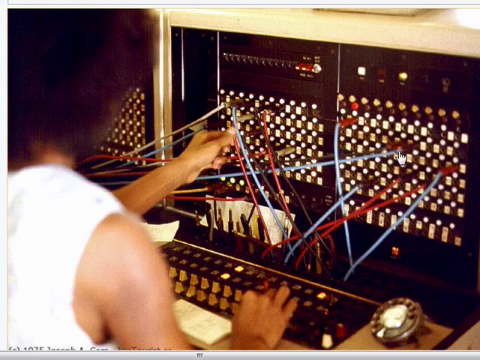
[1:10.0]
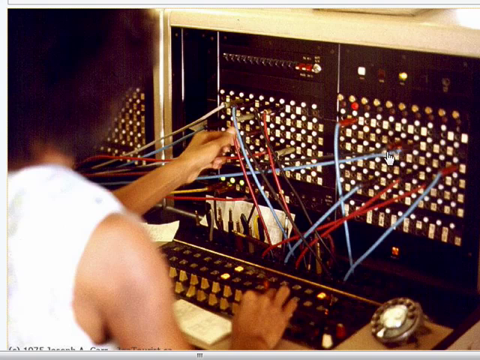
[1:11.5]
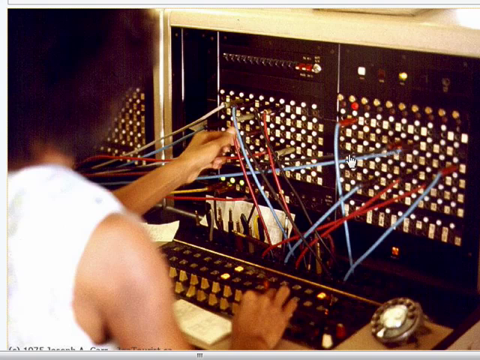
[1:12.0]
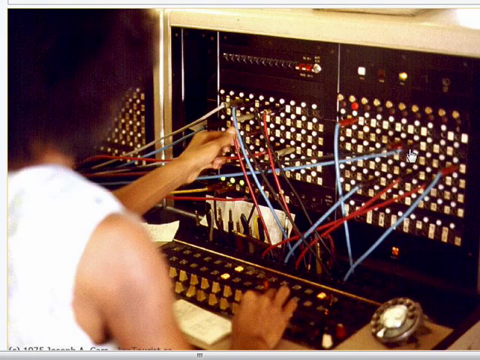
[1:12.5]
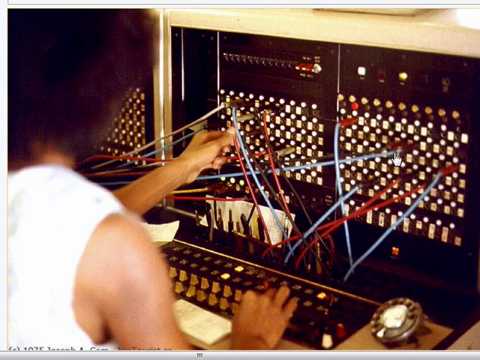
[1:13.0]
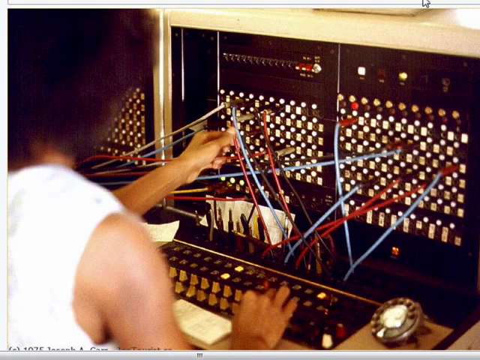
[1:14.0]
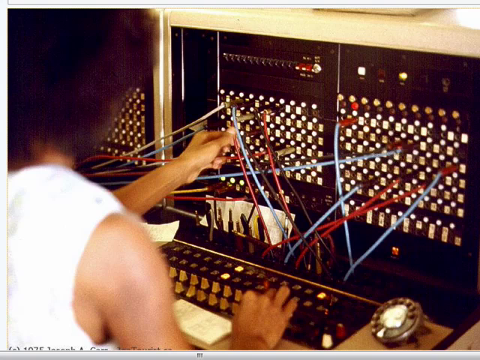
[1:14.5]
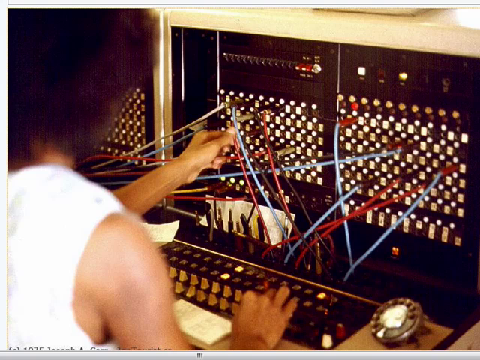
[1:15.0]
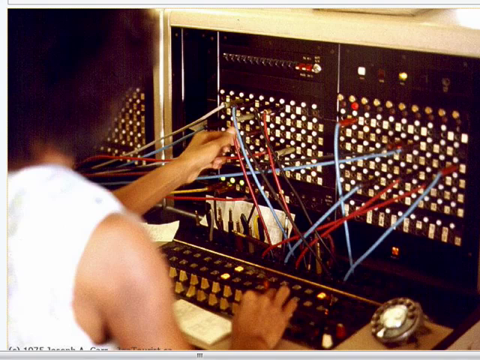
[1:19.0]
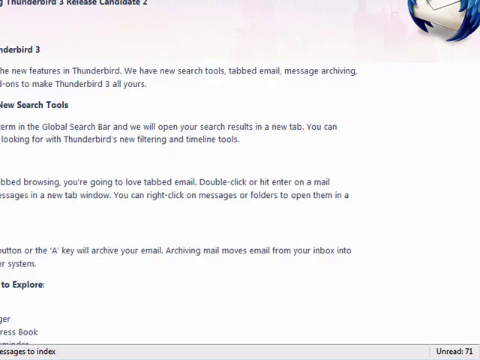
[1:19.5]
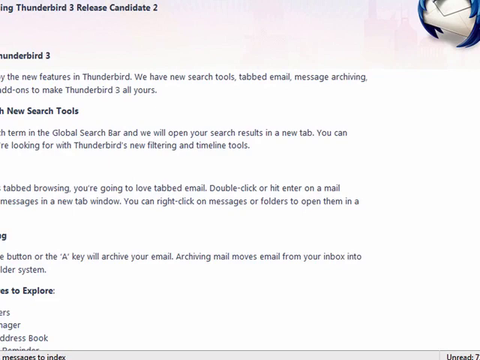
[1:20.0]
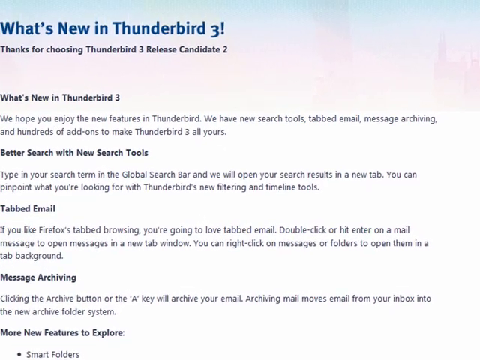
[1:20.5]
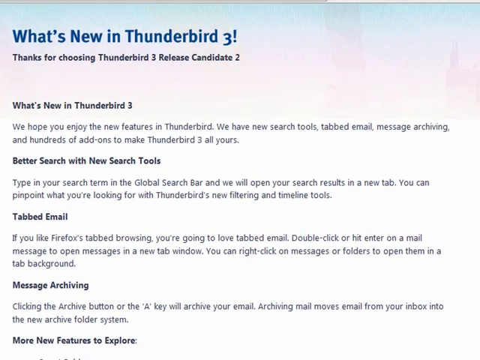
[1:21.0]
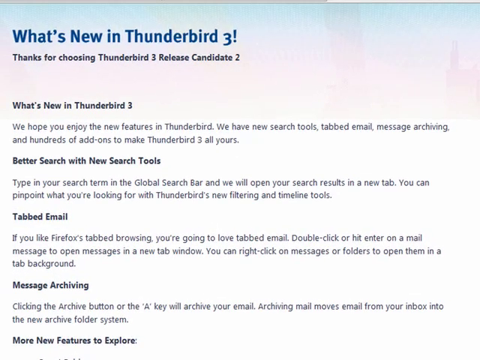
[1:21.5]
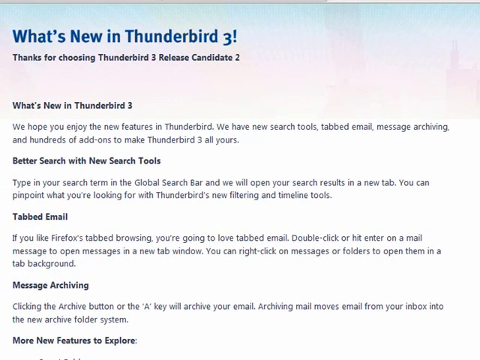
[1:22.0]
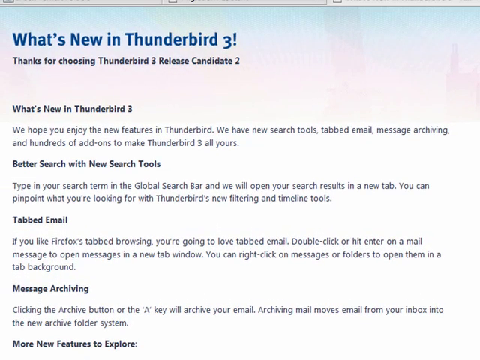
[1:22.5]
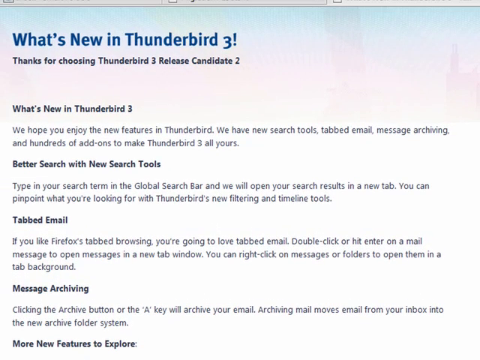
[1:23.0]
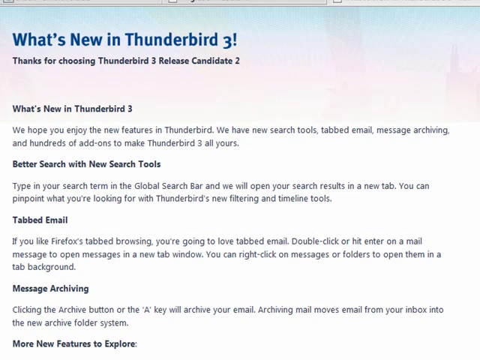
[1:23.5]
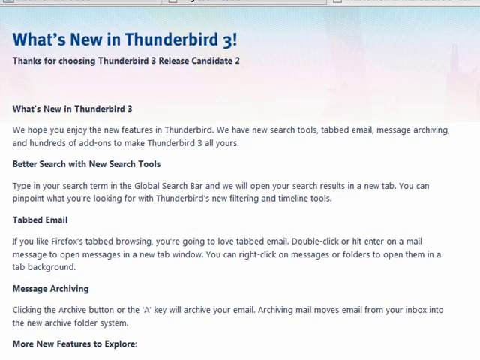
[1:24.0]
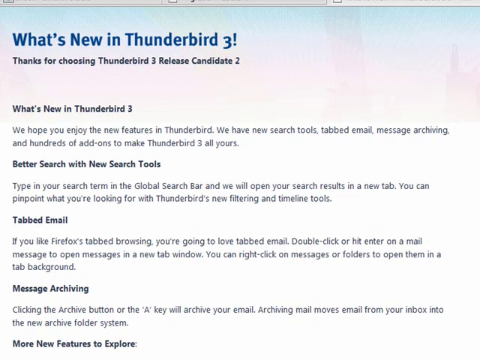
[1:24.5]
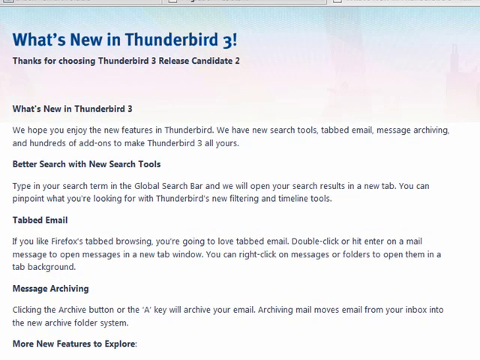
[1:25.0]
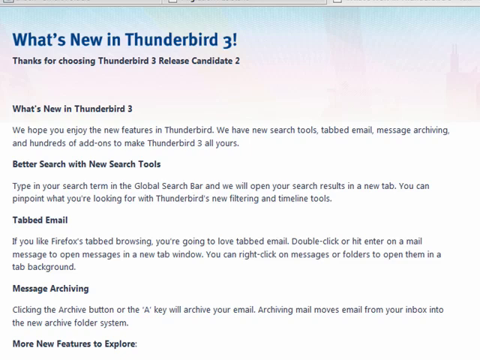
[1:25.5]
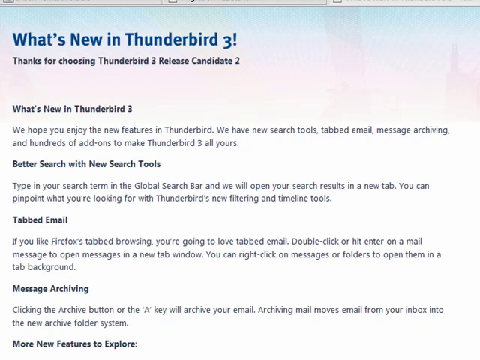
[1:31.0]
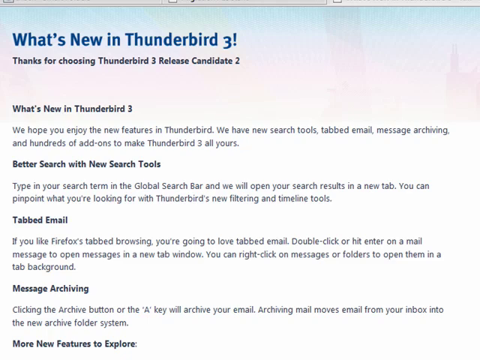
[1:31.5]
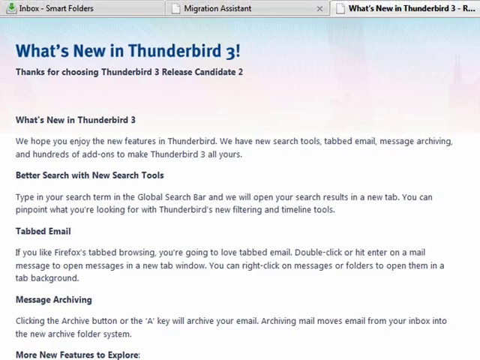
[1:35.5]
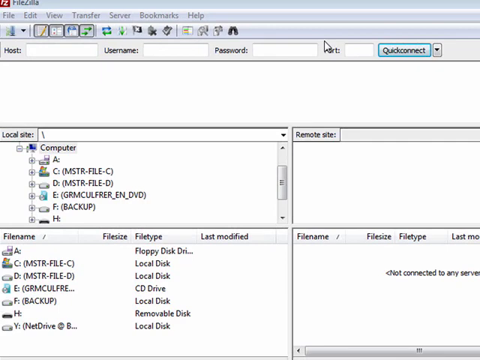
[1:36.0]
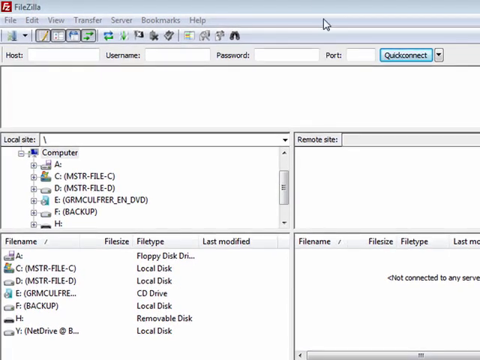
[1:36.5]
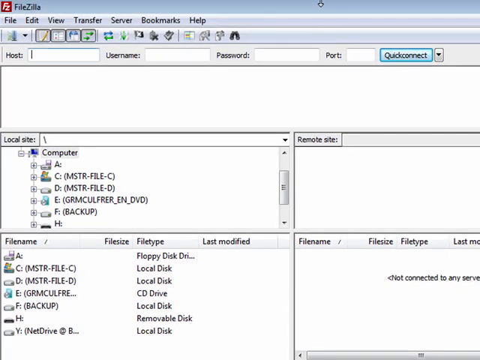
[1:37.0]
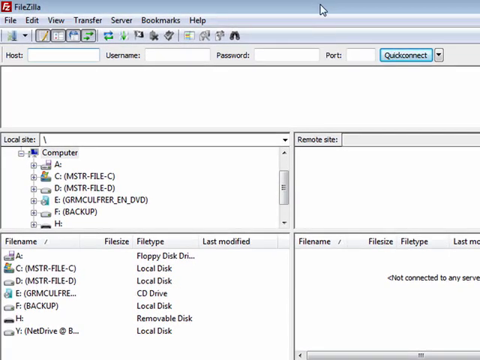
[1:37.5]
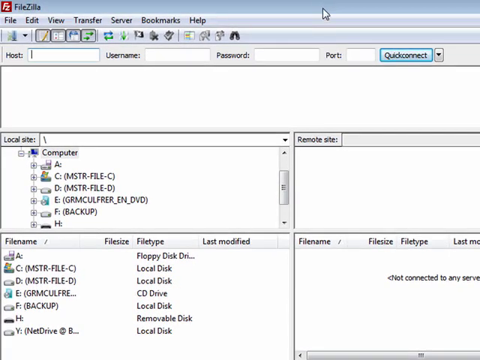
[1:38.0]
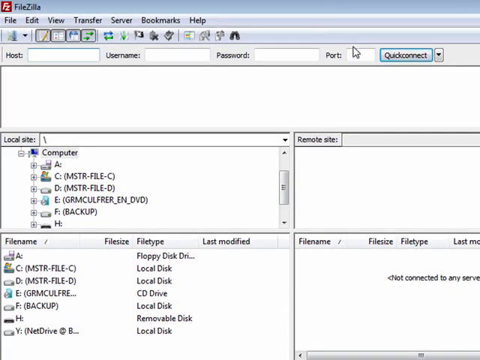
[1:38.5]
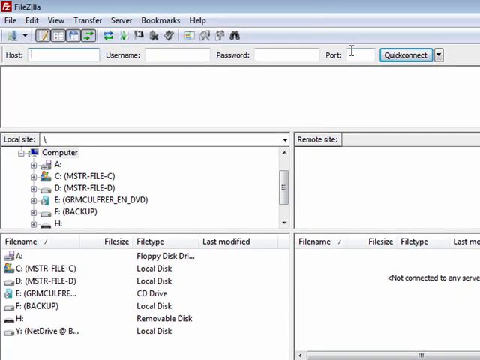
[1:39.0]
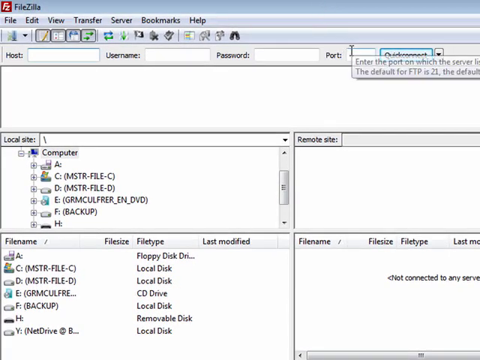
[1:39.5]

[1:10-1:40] A close-up view shows the image of an old-fashioned analog telephone switchboard. It is dark brown, with rows and columns of hundreds and hundreds of holes into which telephone cables can be plugged to make connections. On the left side of the screen is a female telephone operator with an afro, wearing a white sleeveless blouse. Her back is toward the viewer, showing just the right side of her back, shoulder and hair. A white mouse pointer icon hovers across the screen. Next, an article appears with blue text reading "what's new in thunderbird thanks for choosing thunderbird 3 release candidate 2." The article has about three short sentences, with headers including "What's new in Thunderbird 3?", "Better search with new search tools" and "Tagged email, message archiving."